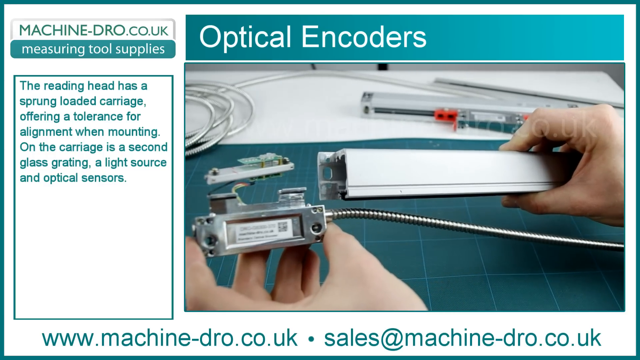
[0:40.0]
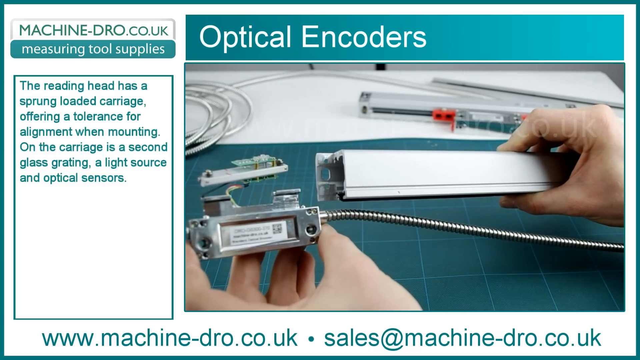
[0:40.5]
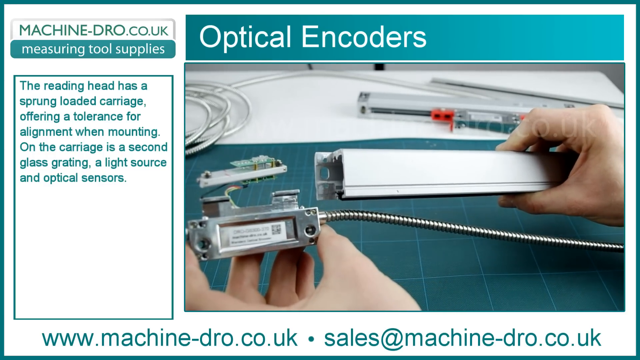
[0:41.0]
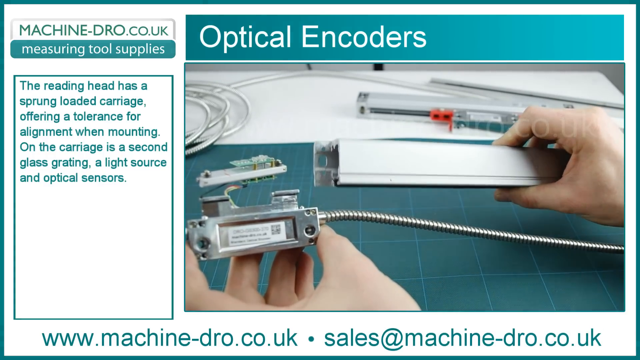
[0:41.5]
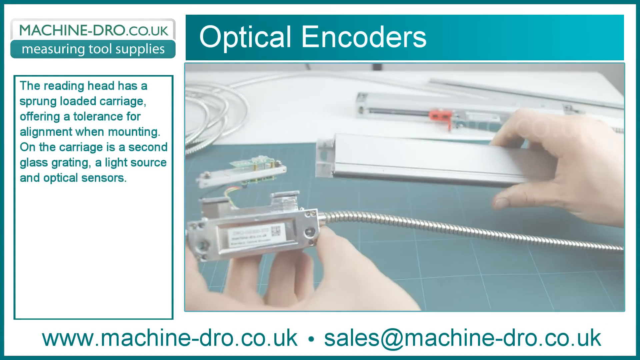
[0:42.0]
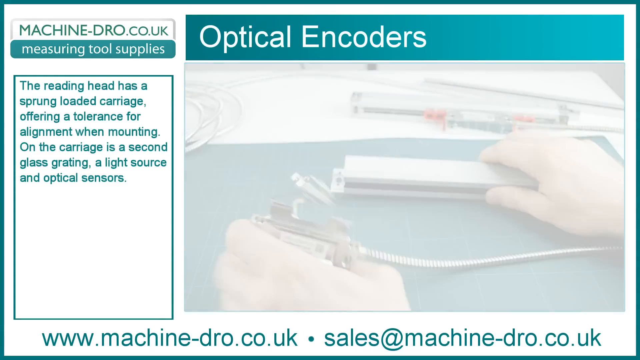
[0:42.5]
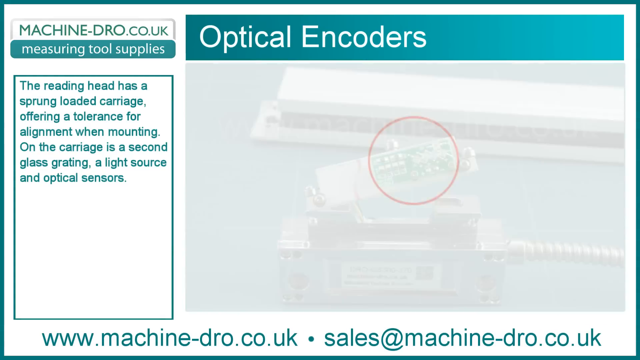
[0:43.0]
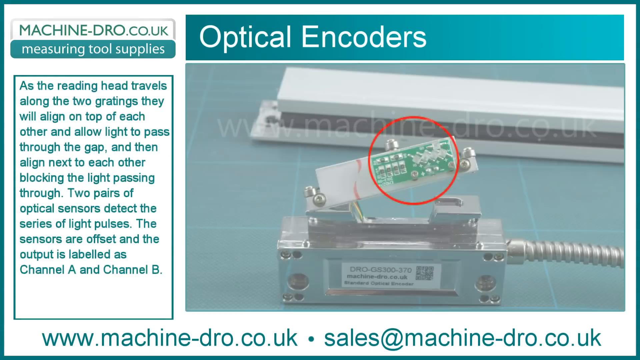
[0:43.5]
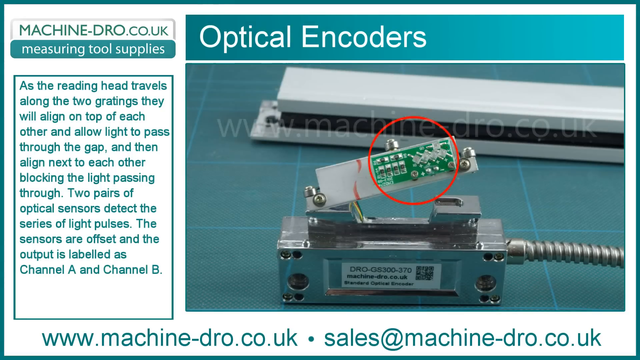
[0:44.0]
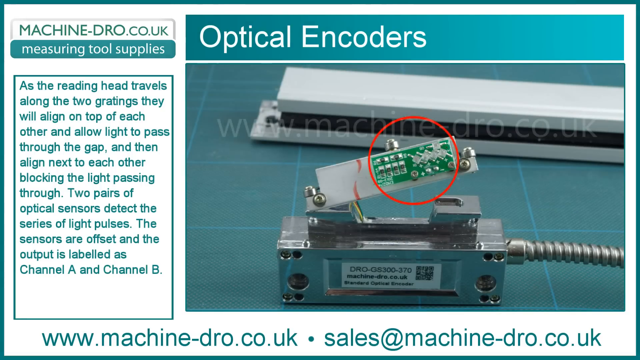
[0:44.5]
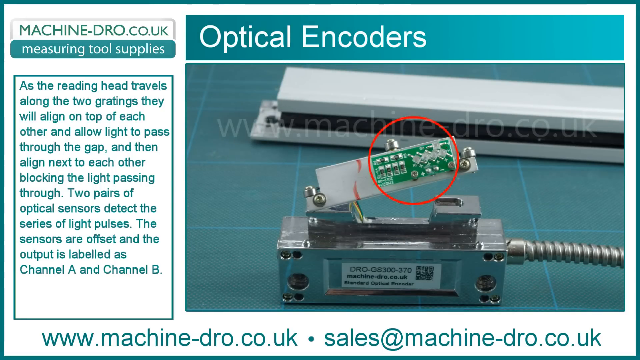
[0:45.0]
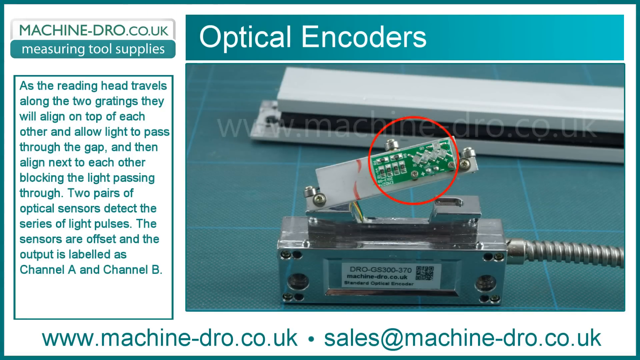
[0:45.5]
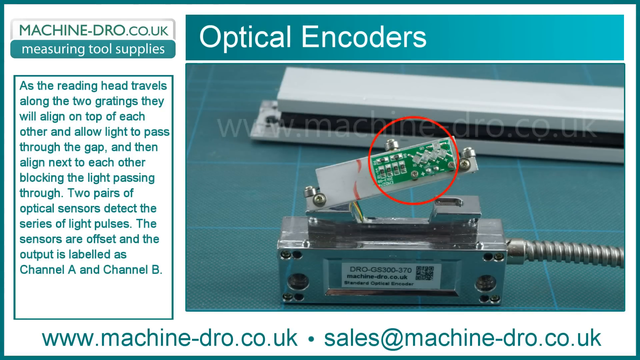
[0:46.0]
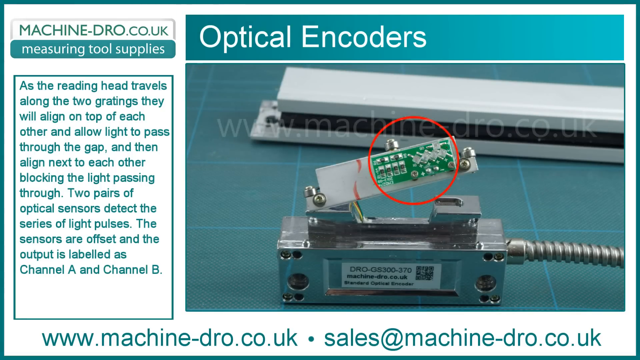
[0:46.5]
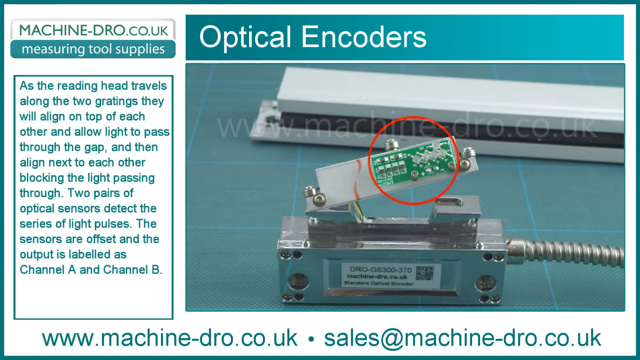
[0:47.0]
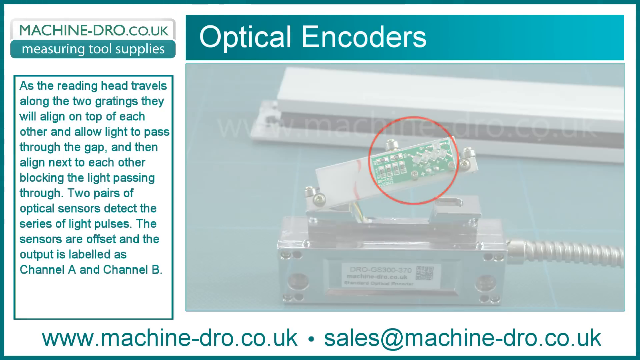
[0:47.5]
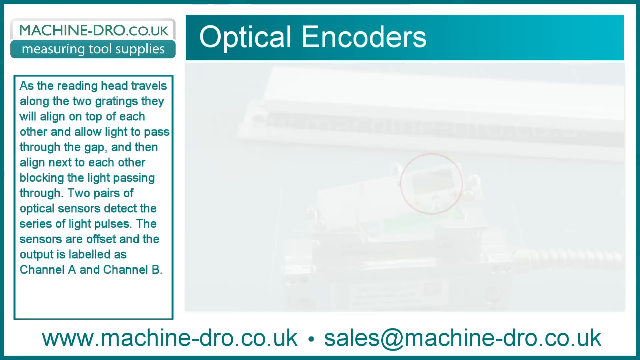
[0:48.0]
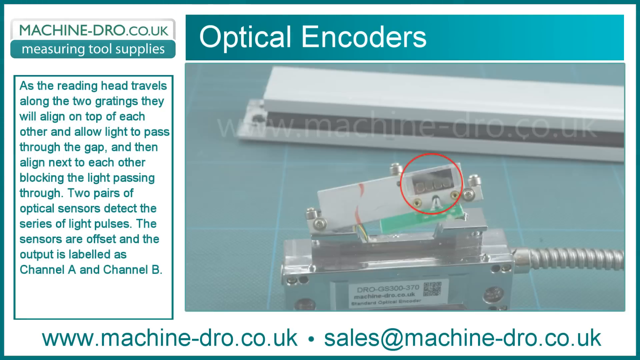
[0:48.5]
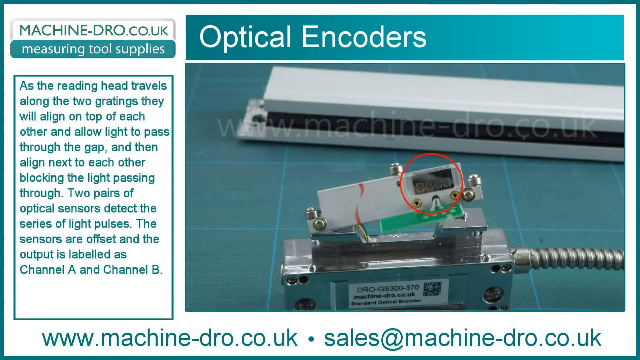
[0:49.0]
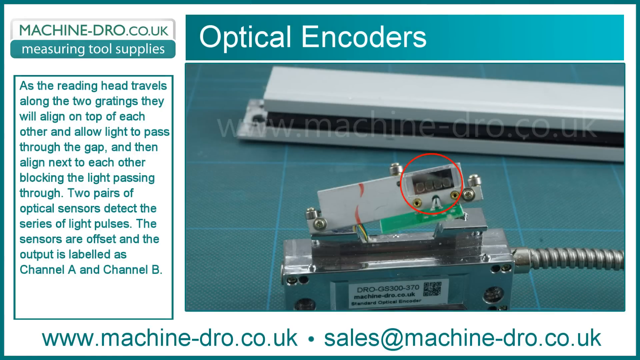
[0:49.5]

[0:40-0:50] The video focuses on the optical encoder piece. Hands, apparently a woman's, turn the piece and show how it slides through. A component of the piece is then shown circled in red; it looks like a switchboard, has connectors, and is viewed from its underside. This component pops out from the metal box, sticking out diagonally from it, and the part circled in red is possibly a motherboard. Text on the side says it is the head, which travels along the two gratings; the gratings align on top of each other, allowing light to pass through the gap, and then align next to each other, blocking the light. It says two pairs of optical sensors detect a series of light pulses, the sensors are offset, and the output is labeled as channel A and B.